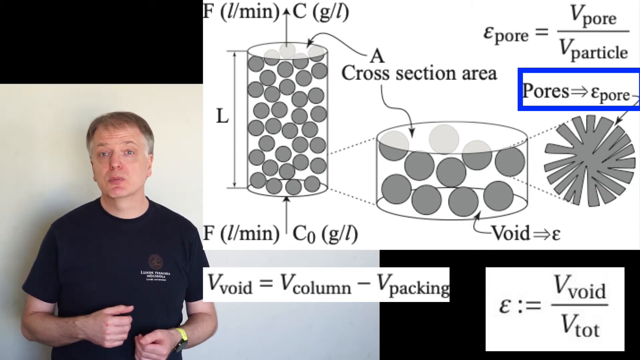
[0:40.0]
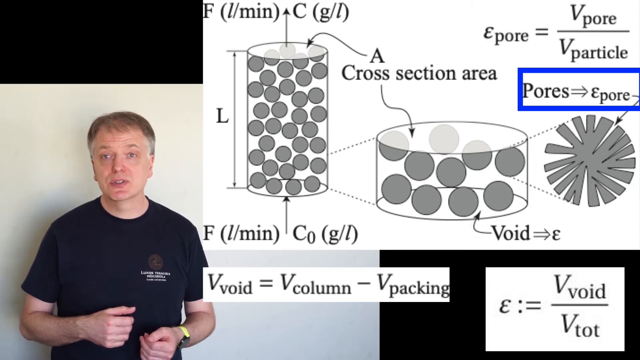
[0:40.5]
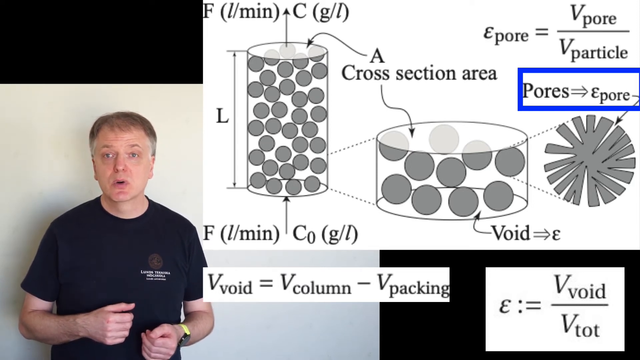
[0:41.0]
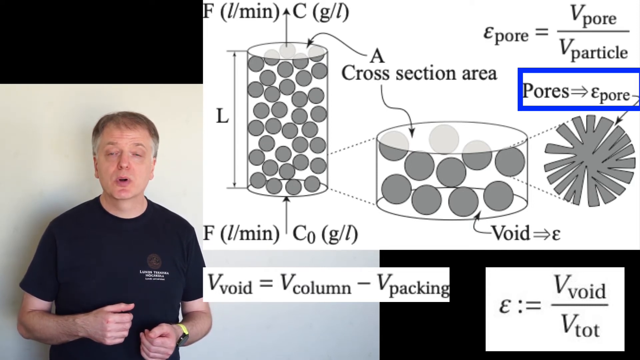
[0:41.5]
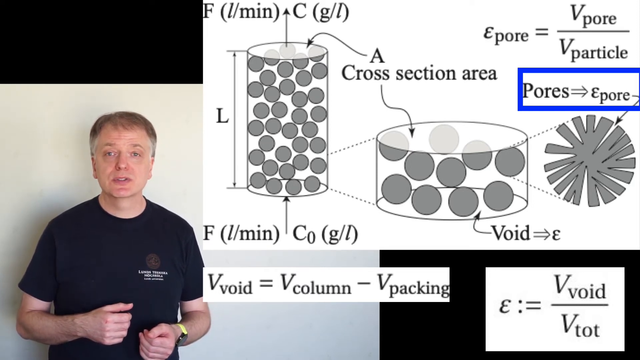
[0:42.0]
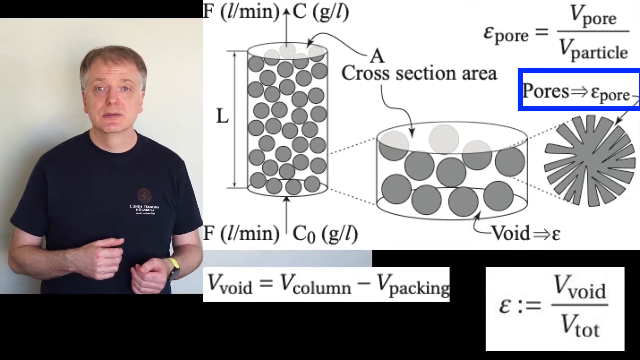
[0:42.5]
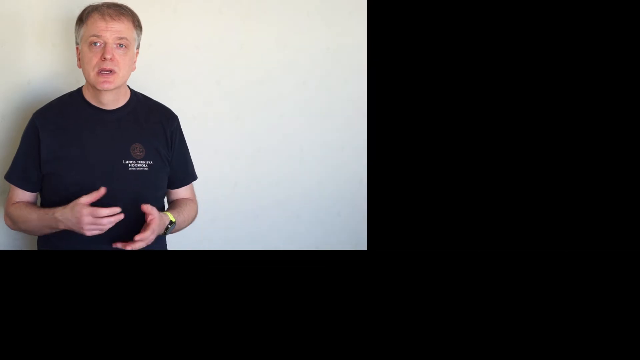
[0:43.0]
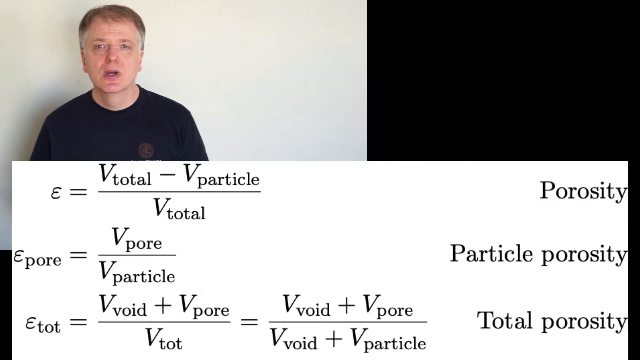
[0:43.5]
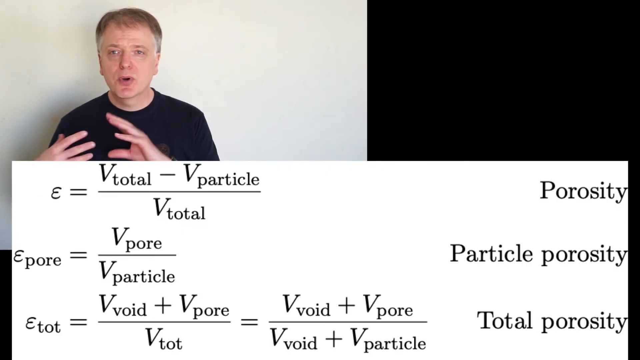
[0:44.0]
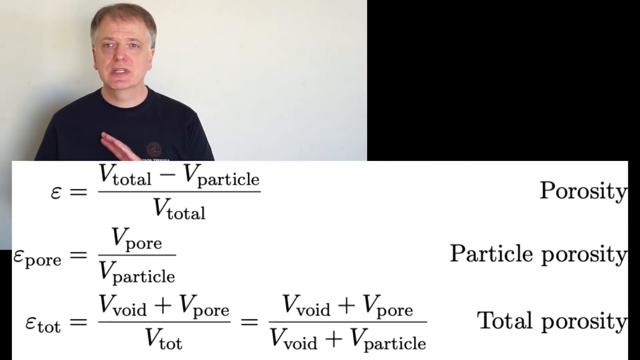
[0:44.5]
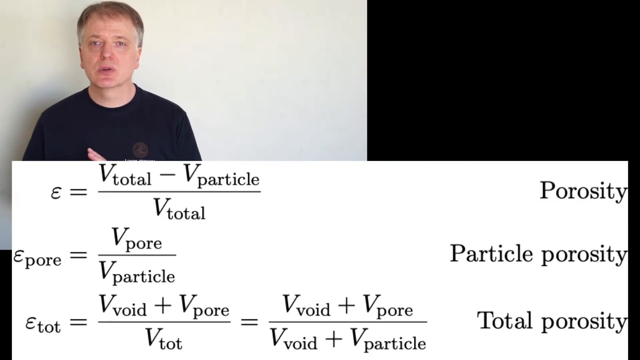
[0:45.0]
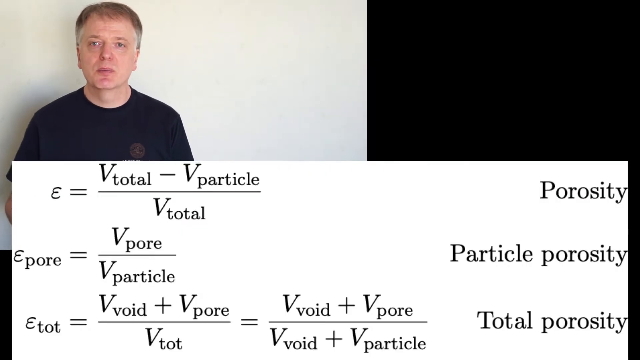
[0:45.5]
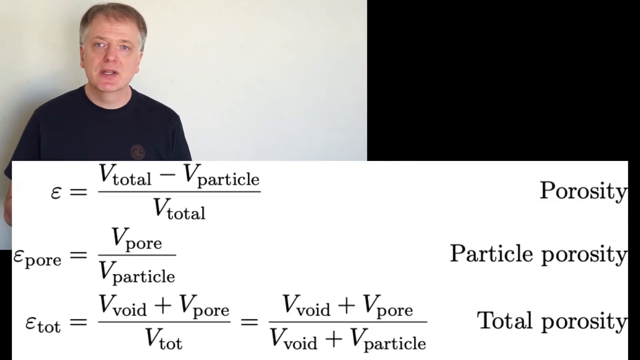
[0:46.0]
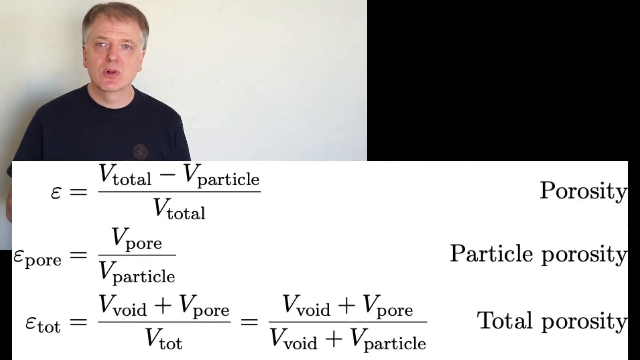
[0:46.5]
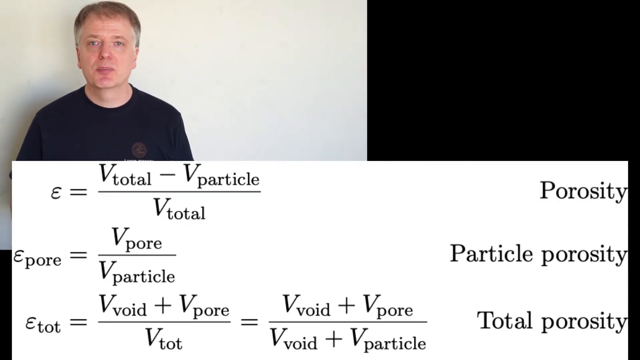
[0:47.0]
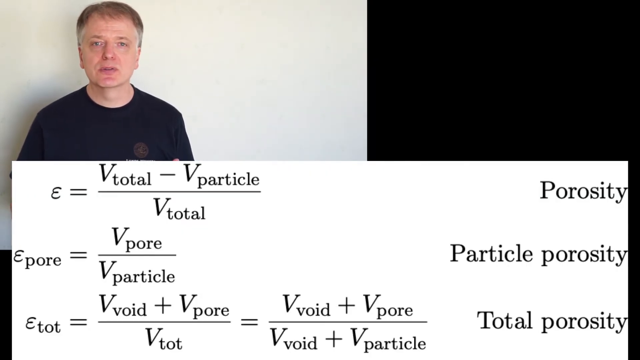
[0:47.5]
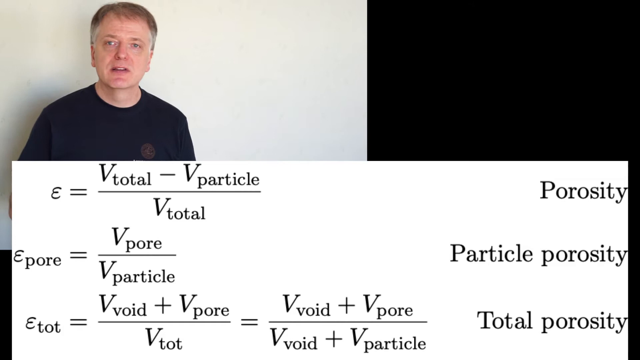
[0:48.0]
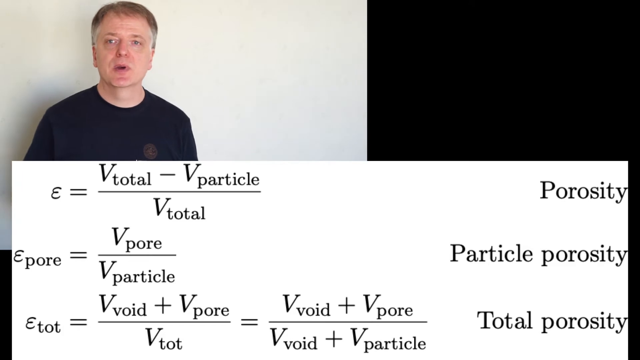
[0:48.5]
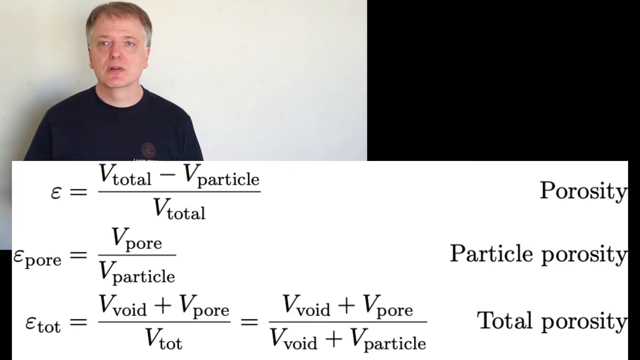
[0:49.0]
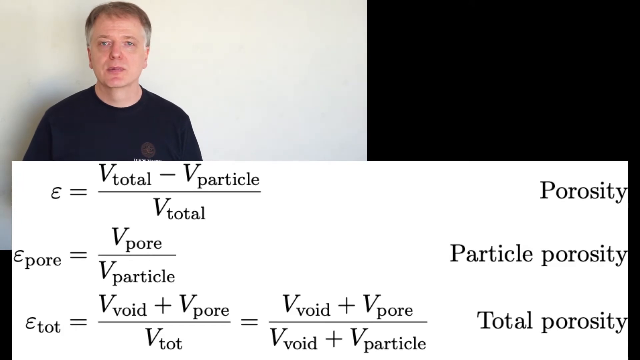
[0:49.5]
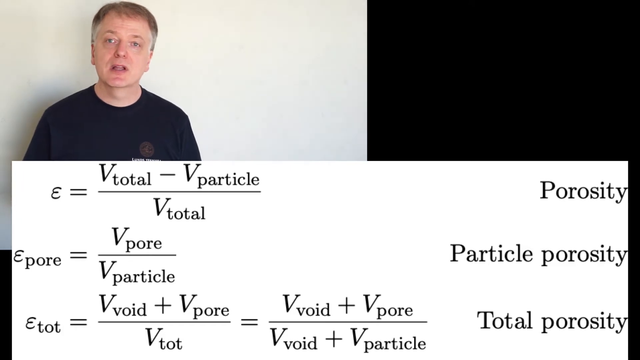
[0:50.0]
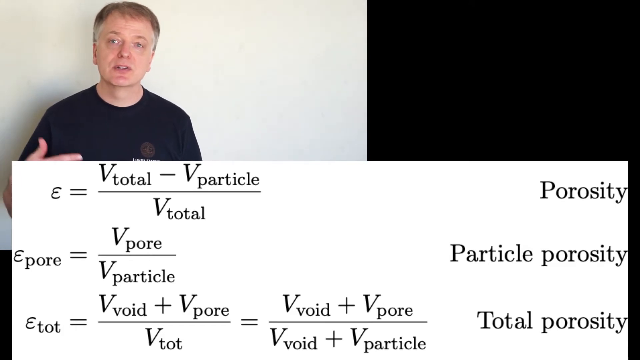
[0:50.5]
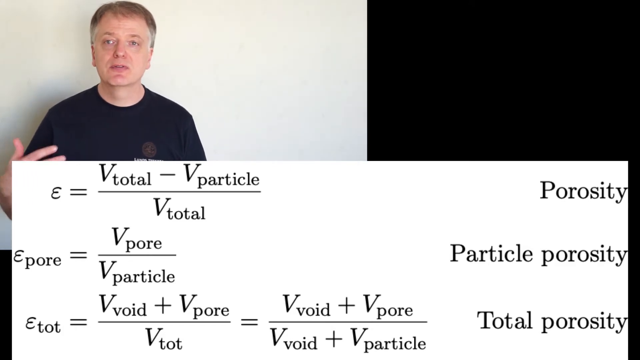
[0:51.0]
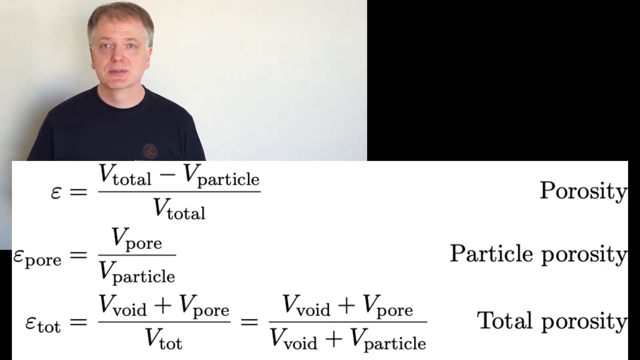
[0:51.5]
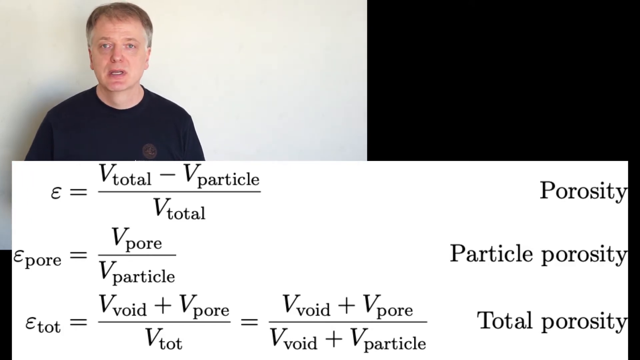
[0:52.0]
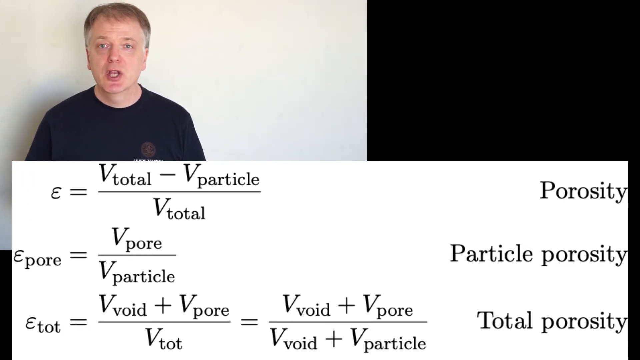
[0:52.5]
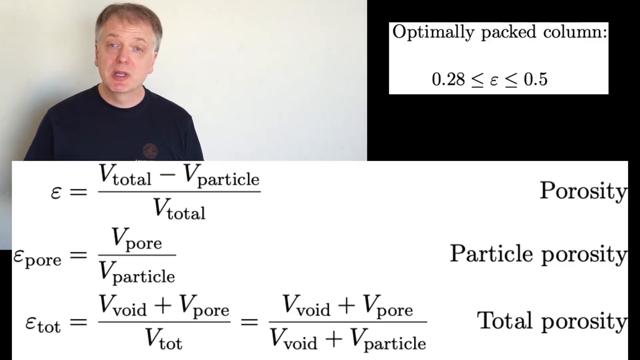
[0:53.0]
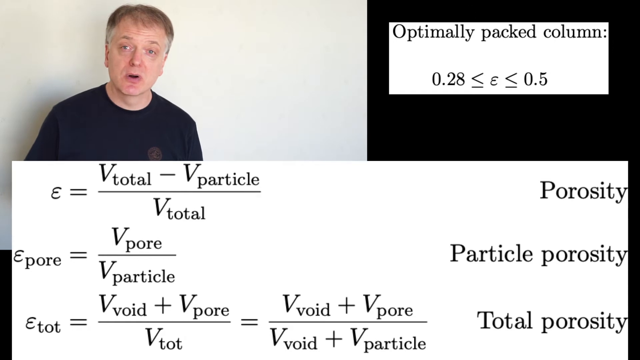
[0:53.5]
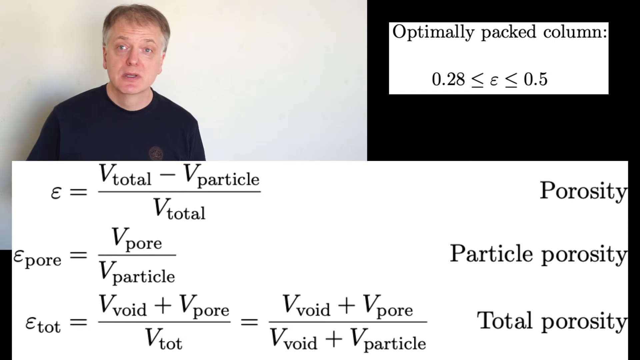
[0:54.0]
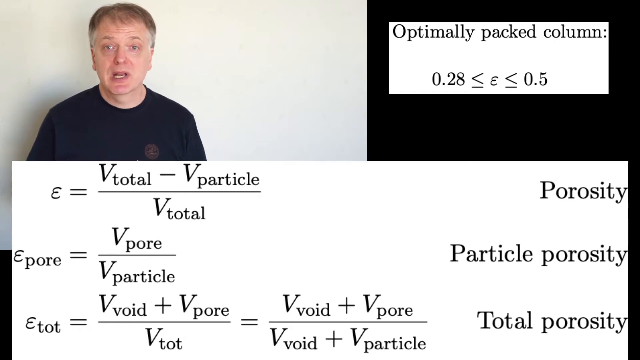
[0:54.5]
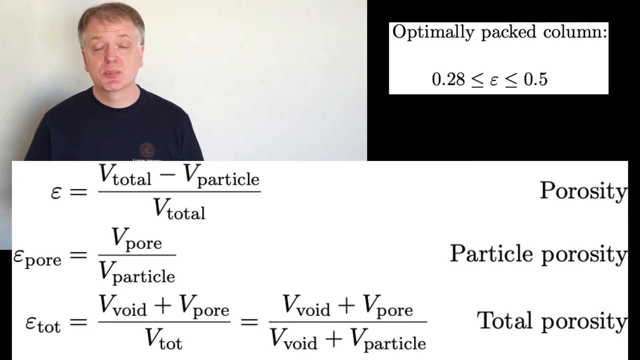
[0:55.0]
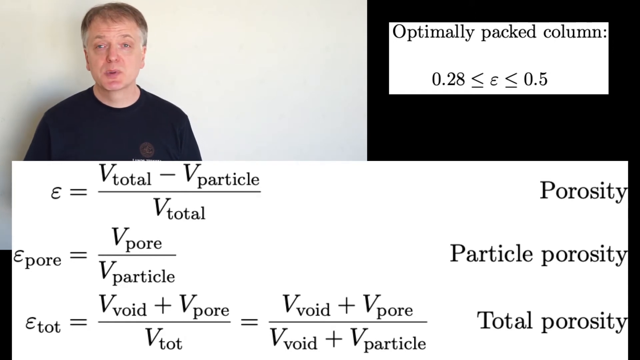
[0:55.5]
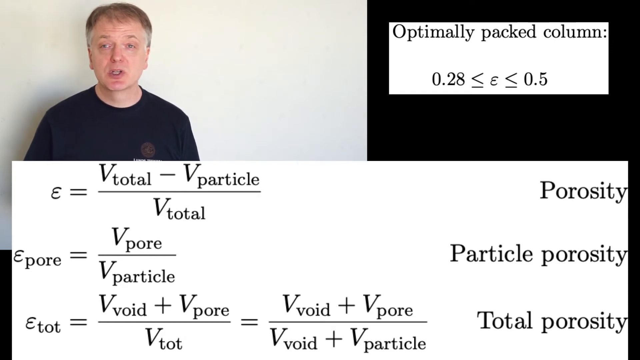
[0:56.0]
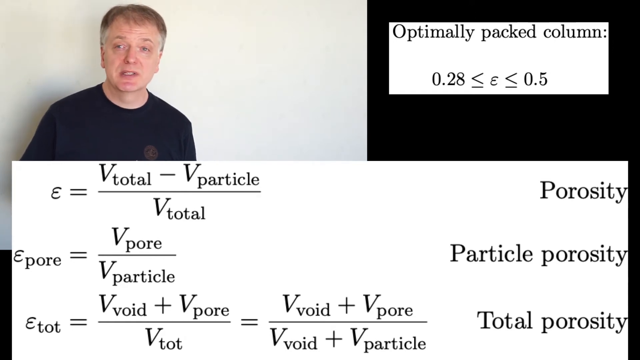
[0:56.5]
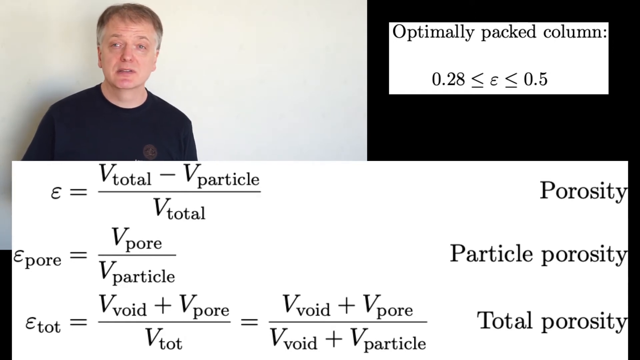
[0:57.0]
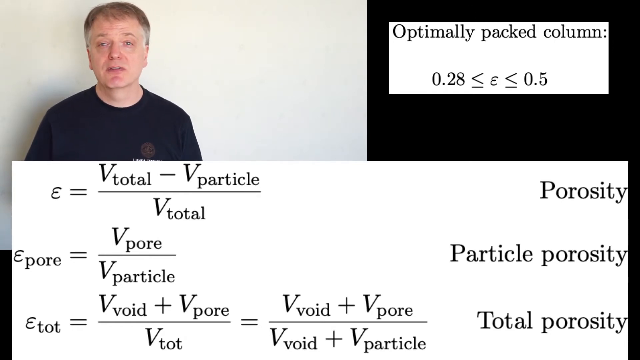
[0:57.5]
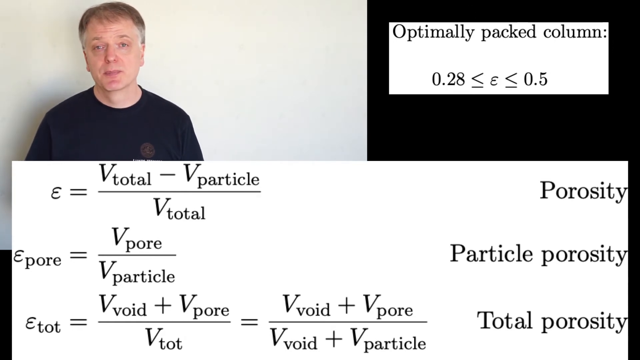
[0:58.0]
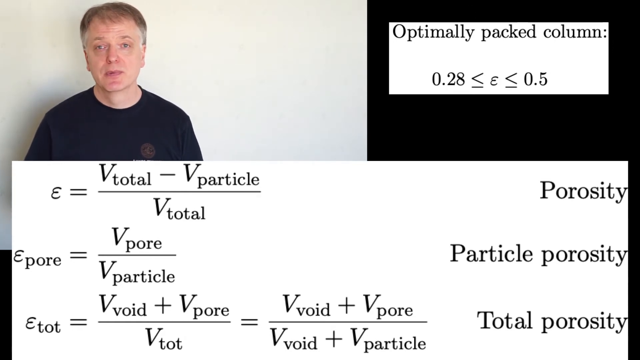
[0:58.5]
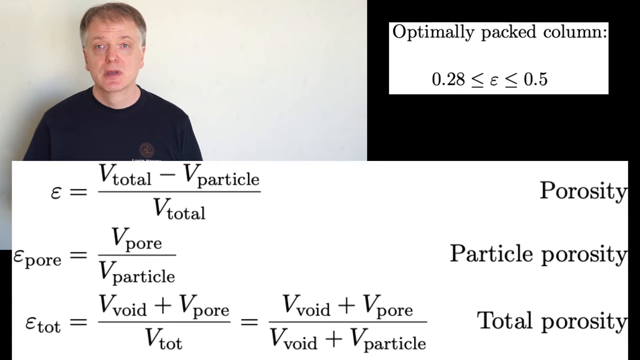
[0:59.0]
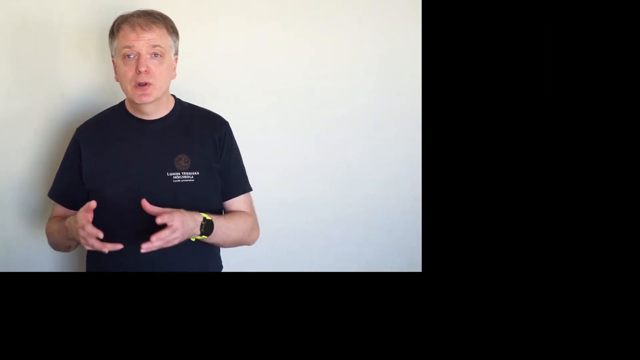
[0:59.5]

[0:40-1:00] A man in a black t-shirt stands near a white wall, with all kinds of chemistry or physics problems to his right. Below him a math problem appears for "porosity", "particle porosity" and "total porosity". In the black area in the upper right corner, text reads "optimally packed column". The words and everything then slide off the page, leaving just him standing against the white wall. More of his body is now visible, including his arms. He wears a watch that is black, with a wrist strap that is all yellow, and he has no rings on any of his fingers.